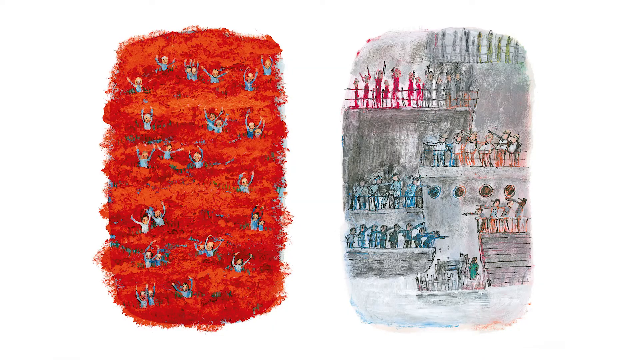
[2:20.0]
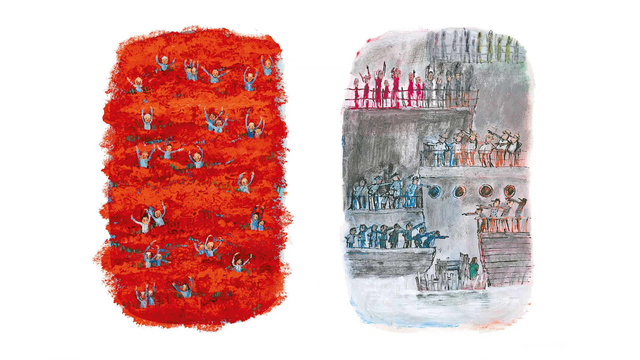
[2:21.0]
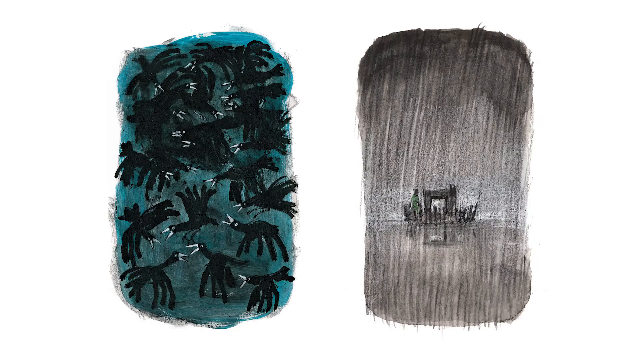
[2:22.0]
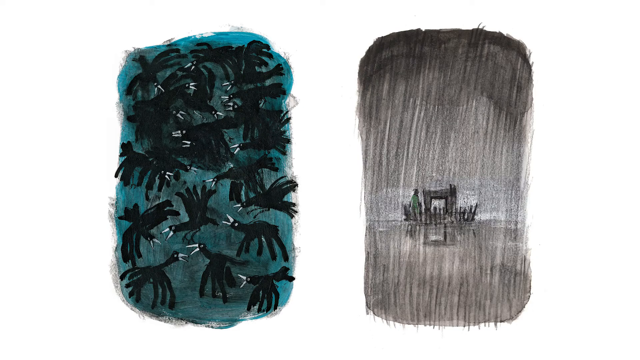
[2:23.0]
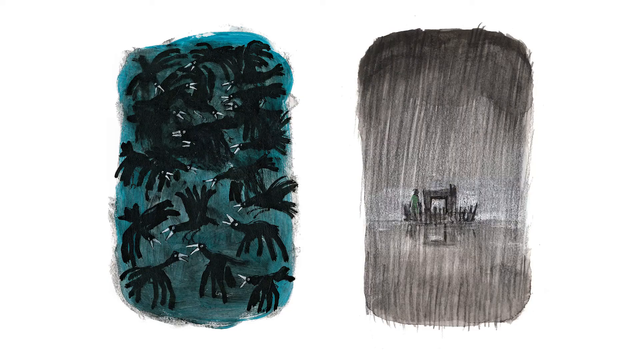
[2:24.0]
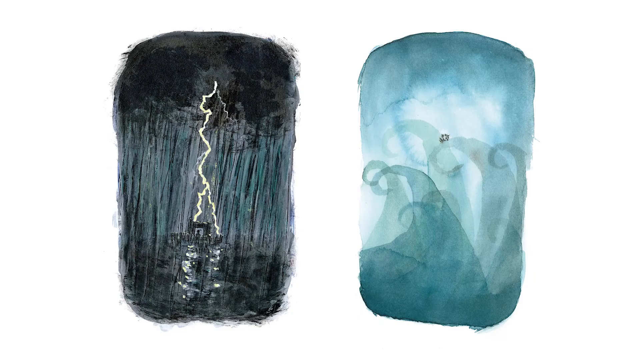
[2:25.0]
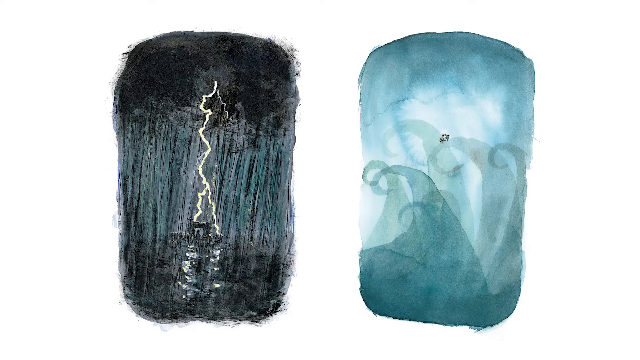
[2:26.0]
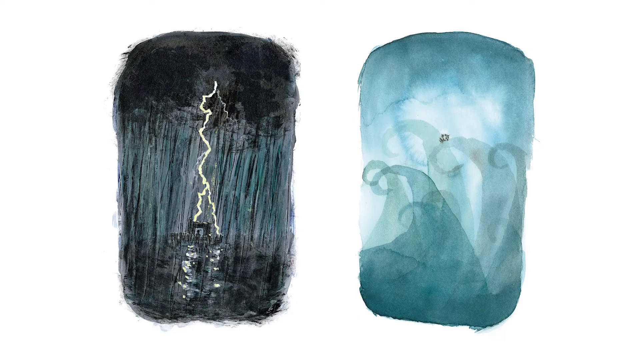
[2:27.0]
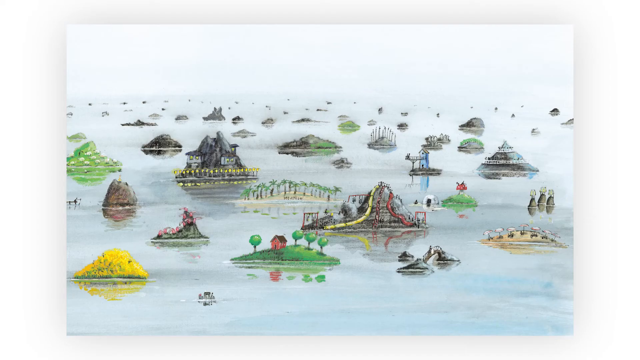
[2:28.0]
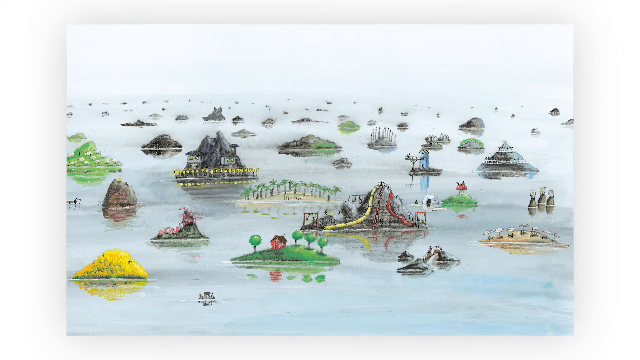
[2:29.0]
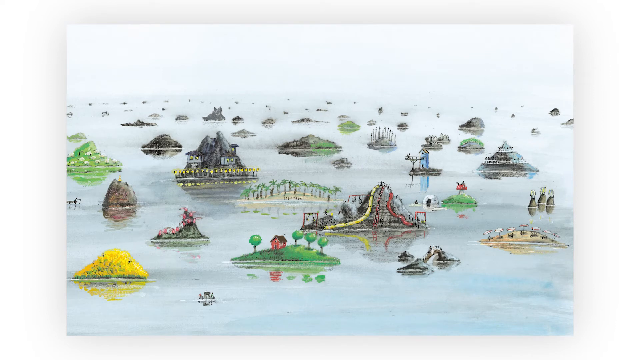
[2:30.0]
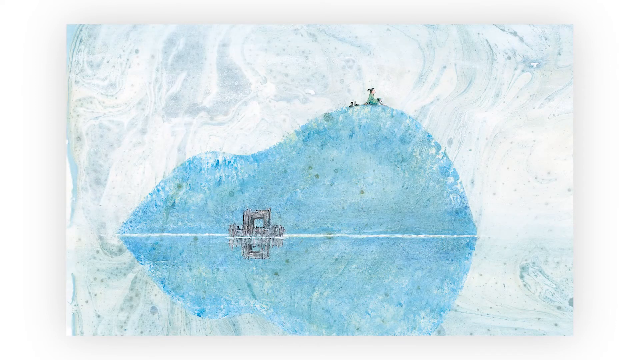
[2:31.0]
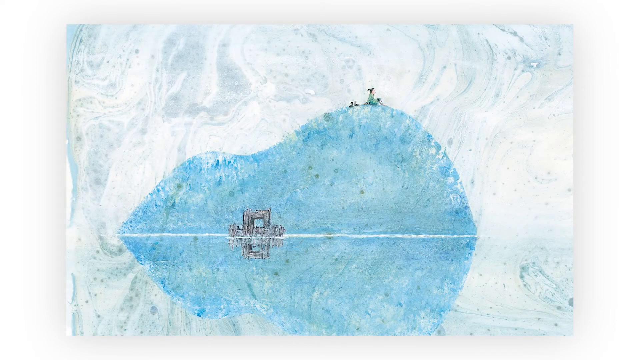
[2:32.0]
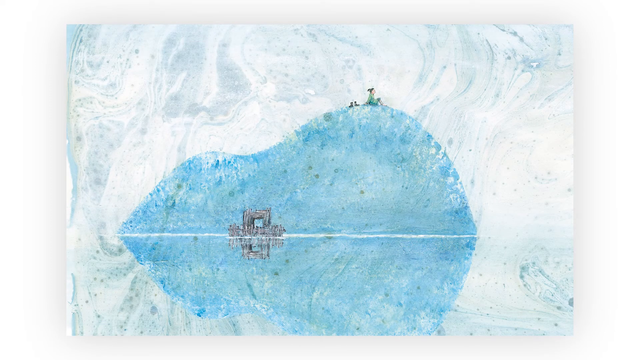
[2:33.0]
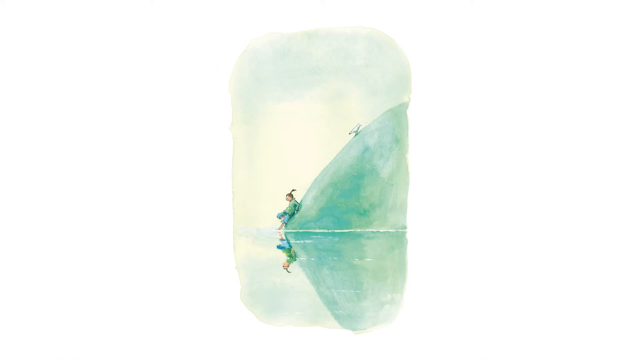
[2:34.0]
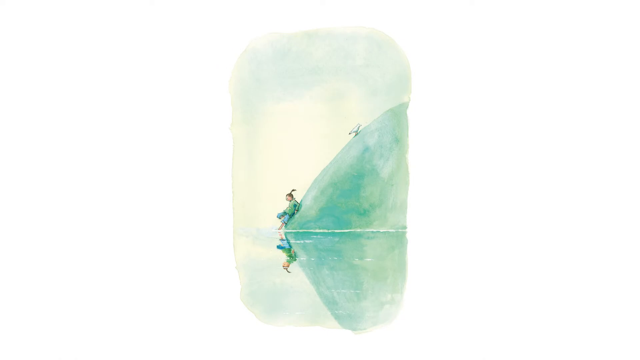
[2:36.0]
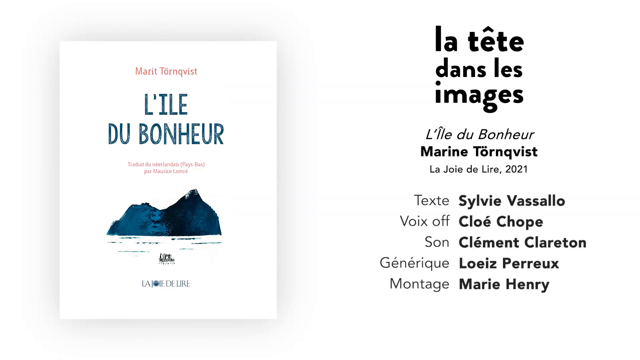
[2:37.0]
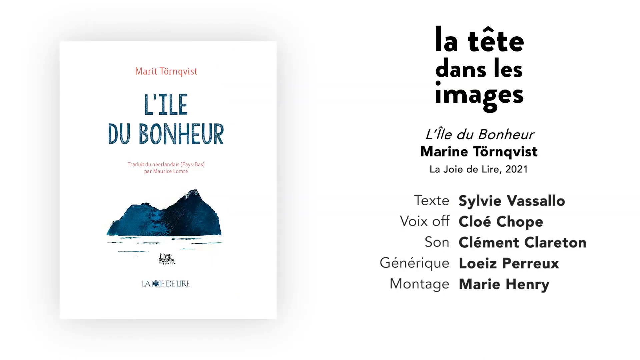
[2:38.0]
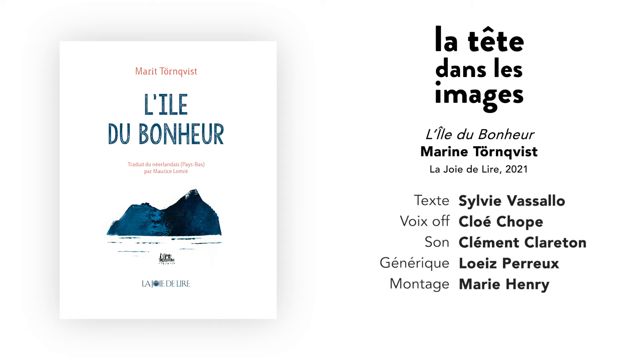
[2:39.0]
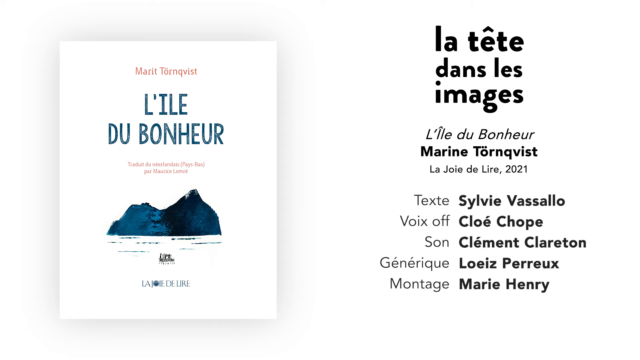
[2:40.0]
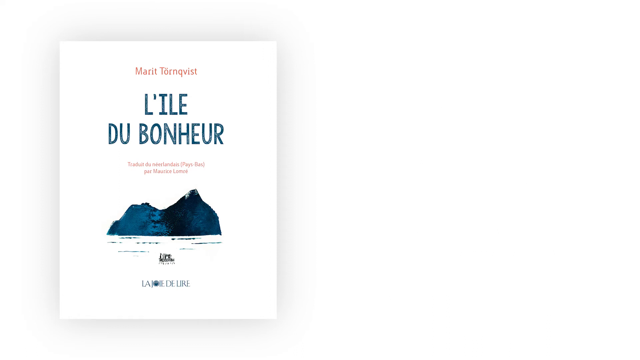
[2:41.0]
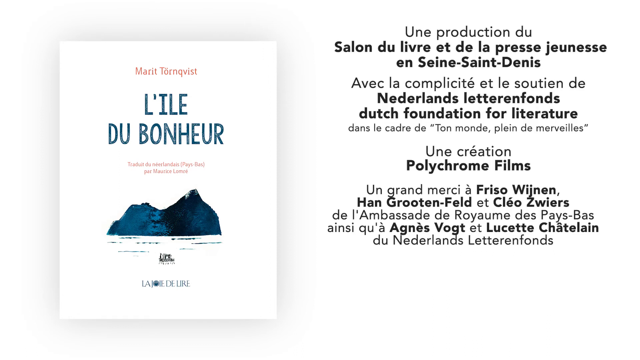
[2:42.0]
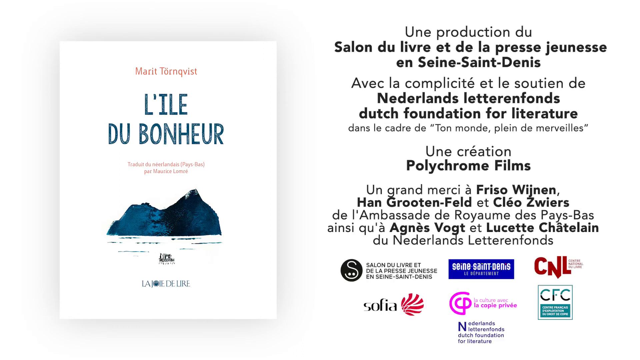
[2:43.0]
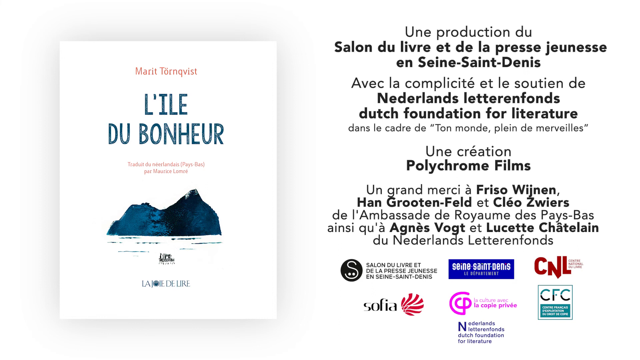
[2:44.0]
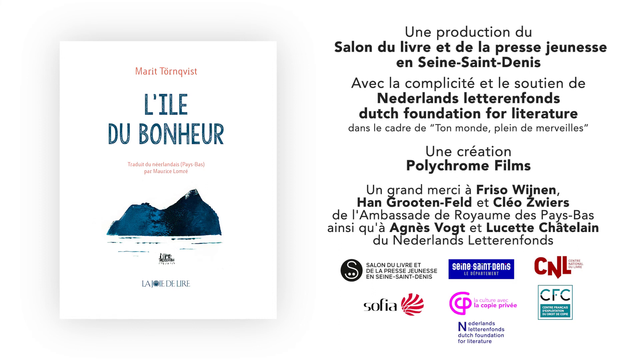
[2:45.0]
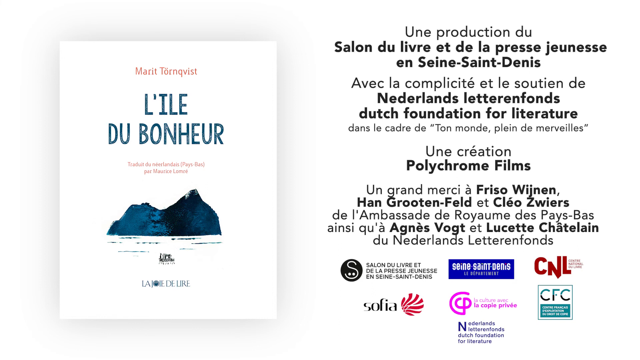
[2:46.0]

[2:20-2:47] Two images are shown. On the left is a scribbled murder of crows facing each other while flying; they look like they are fighting. They are not drawn anatomically correctly. The drawing on the right looks like a pencil was rubbed back and forth to create the effect of dramatic rainfall, and a person stands in the center of a small fenced area, standing by a square structure that is unclear; the person is a little taller than it. The video then goes back to the image of lightning striking something like a tractor or boat or some kind of conveyance, and the other image with giant sea waves like watercolour curls, where there is possibly a little black boat, too small to make out clearly. Another image shows water with many tiny islands: one with yellow flowers, one with a home, one with palm trees, and one with umbrellas and tables or lounge chairs like at a beach, all various random depictions of tiny islands. Next, what looks like a girl sits on something like a giant blue glacier, with a ramshackle little houseboat below it, in a whimsical style. Another girl dips her toes into the water while sitting on a very large, somewhat mounded hill.